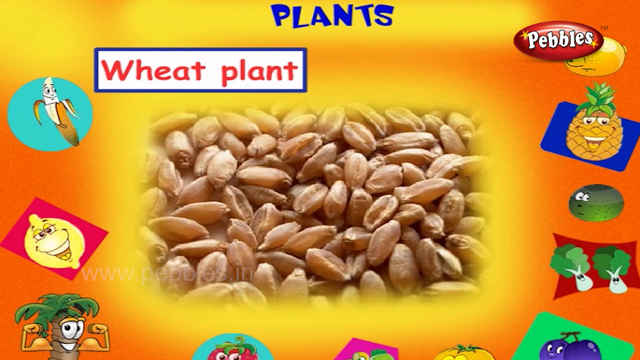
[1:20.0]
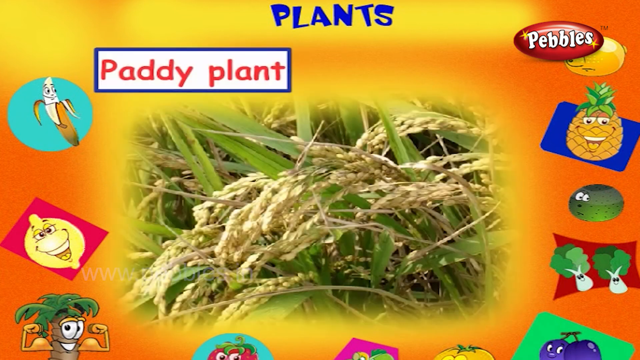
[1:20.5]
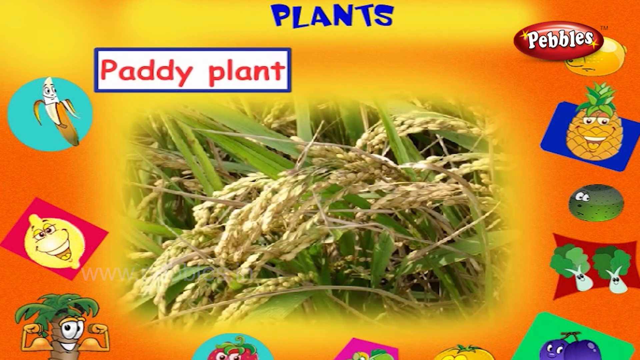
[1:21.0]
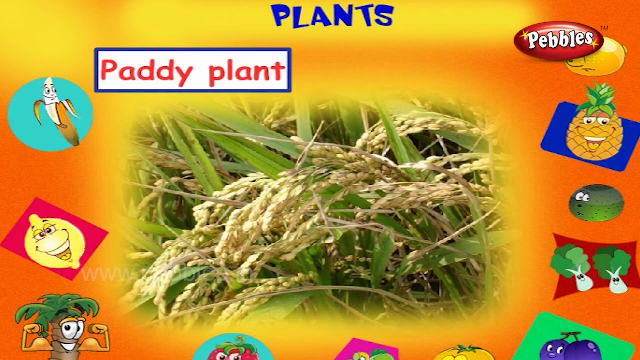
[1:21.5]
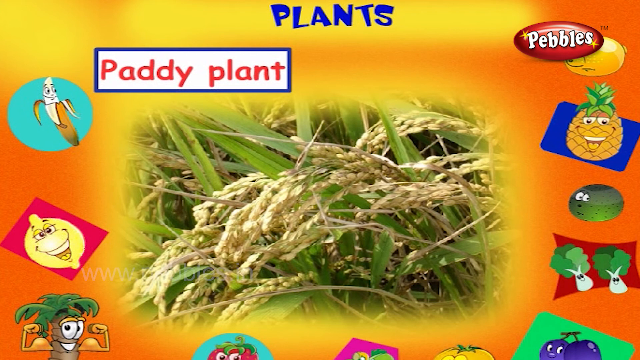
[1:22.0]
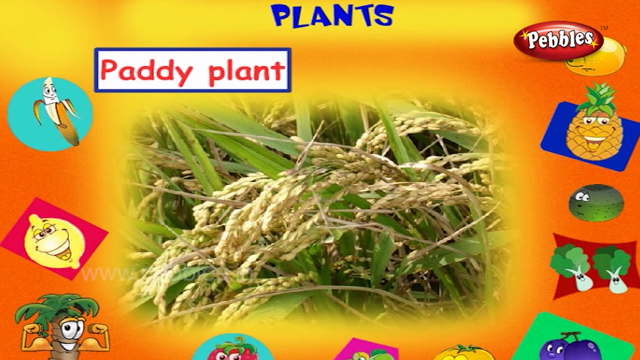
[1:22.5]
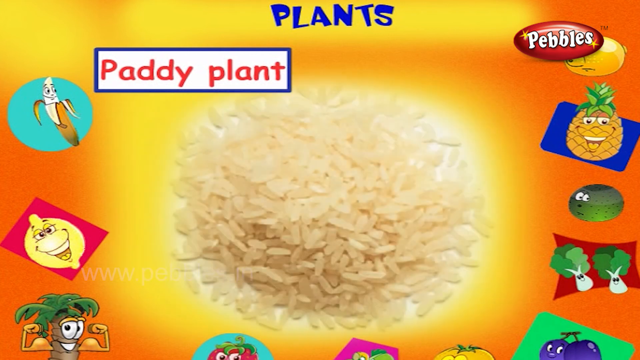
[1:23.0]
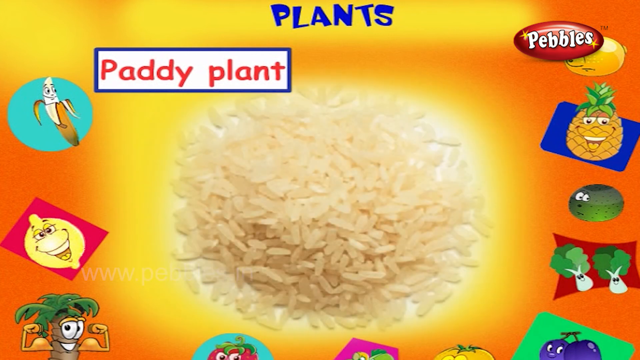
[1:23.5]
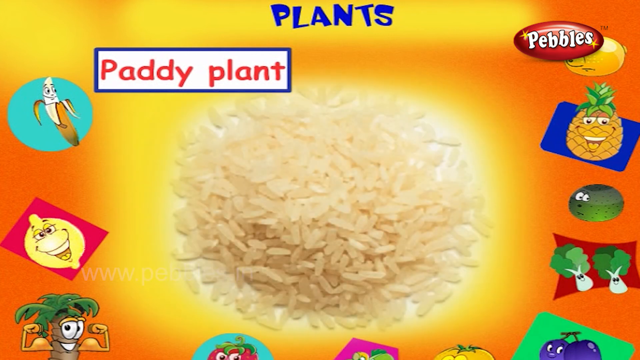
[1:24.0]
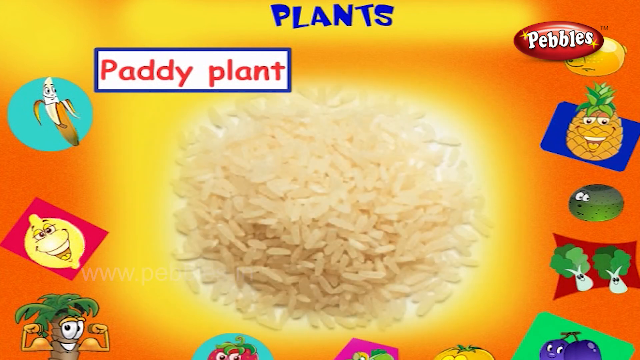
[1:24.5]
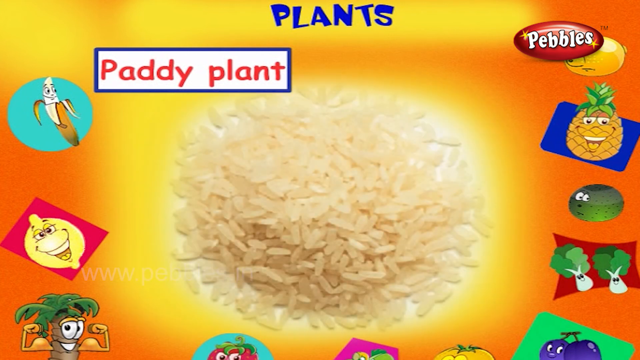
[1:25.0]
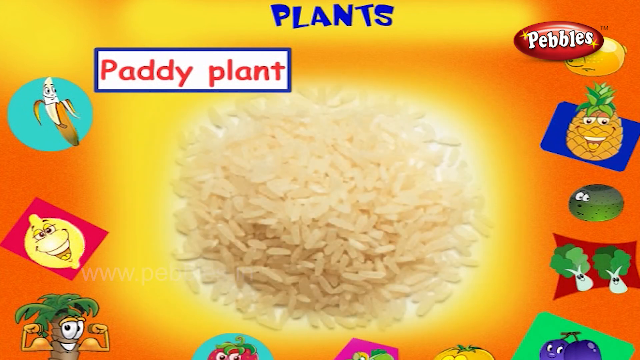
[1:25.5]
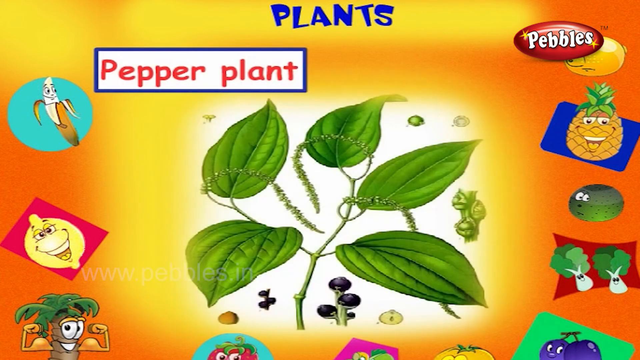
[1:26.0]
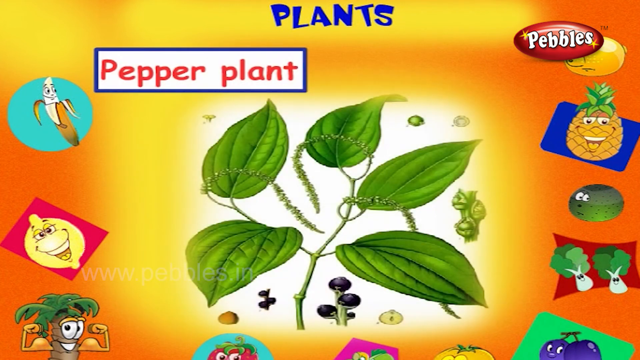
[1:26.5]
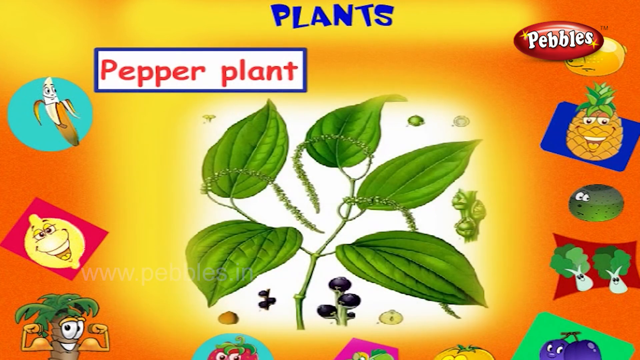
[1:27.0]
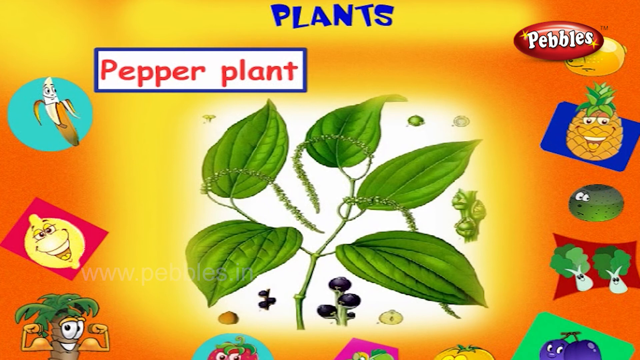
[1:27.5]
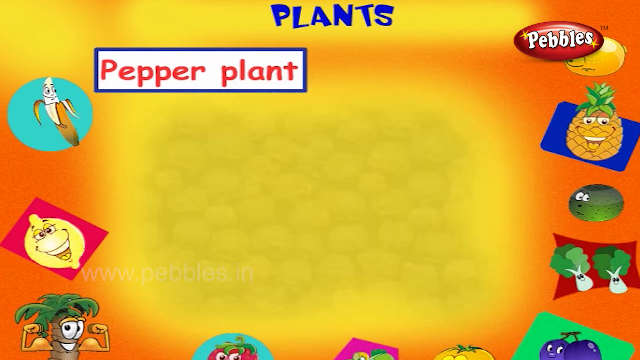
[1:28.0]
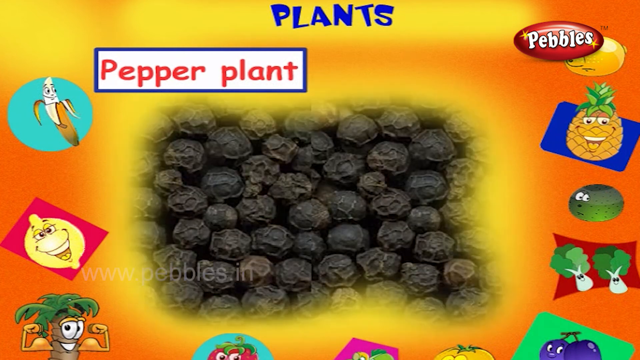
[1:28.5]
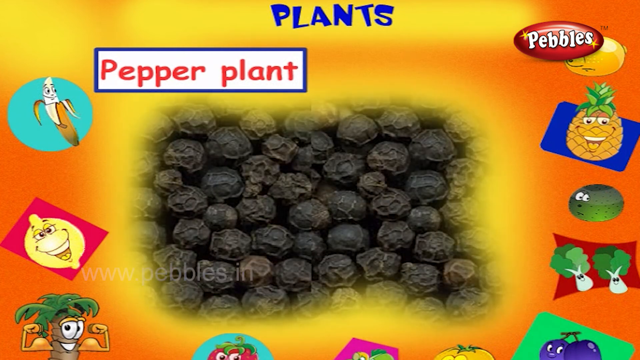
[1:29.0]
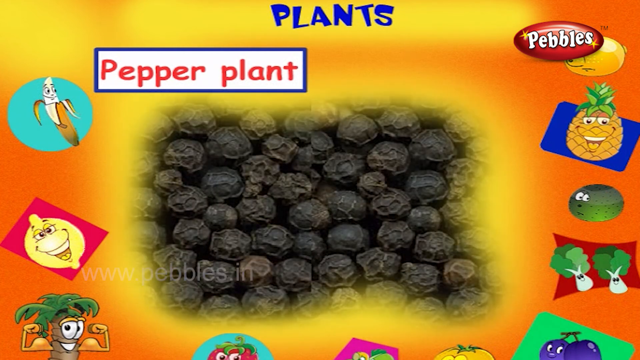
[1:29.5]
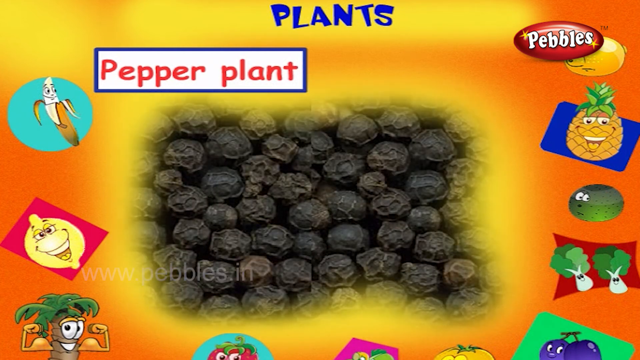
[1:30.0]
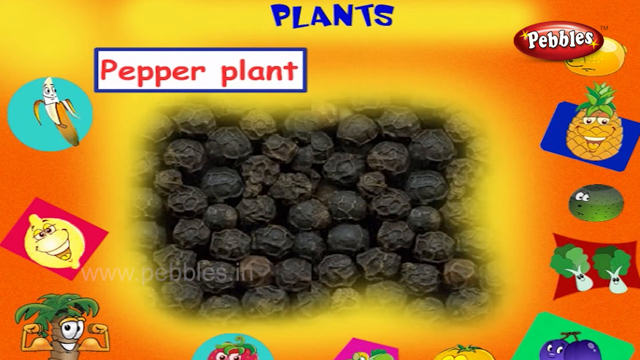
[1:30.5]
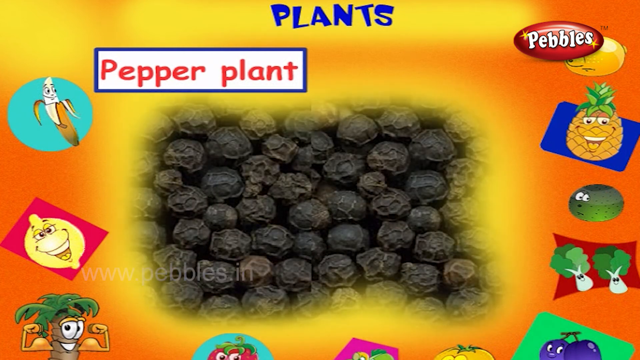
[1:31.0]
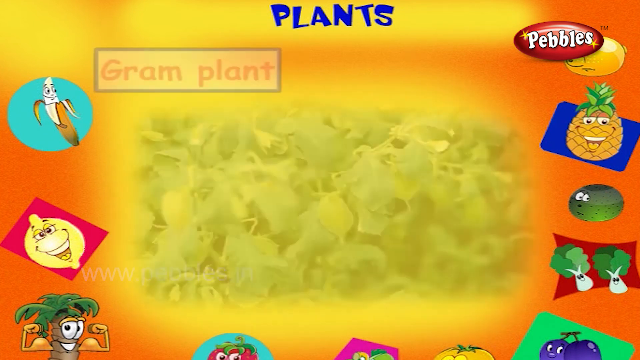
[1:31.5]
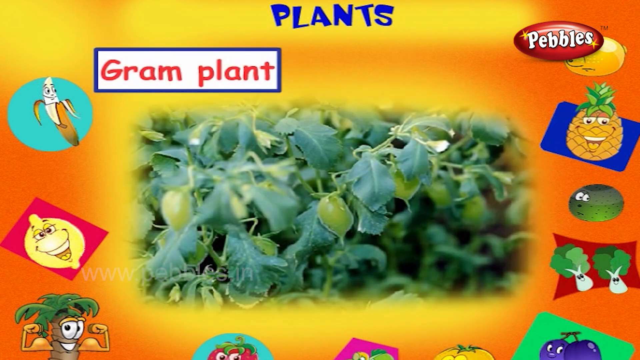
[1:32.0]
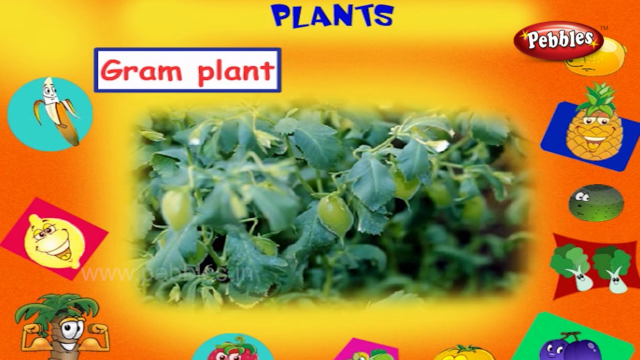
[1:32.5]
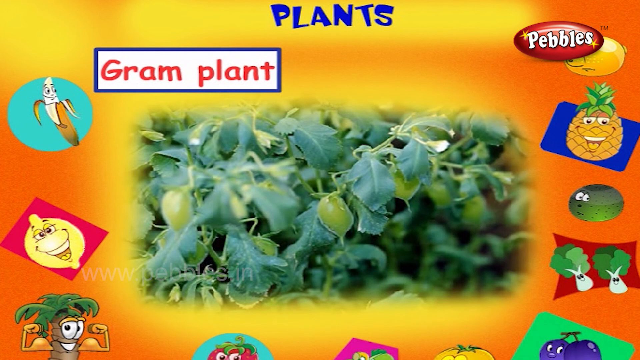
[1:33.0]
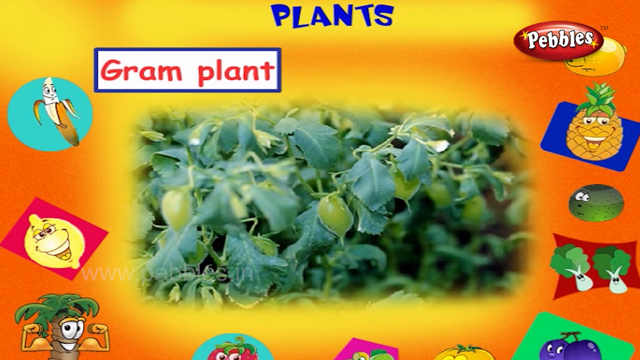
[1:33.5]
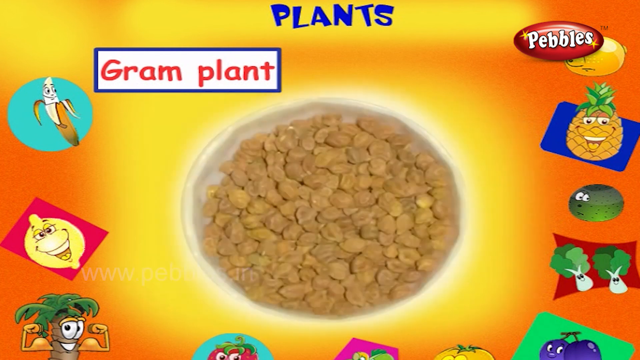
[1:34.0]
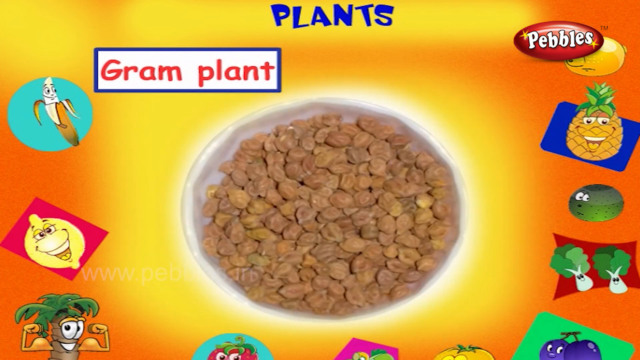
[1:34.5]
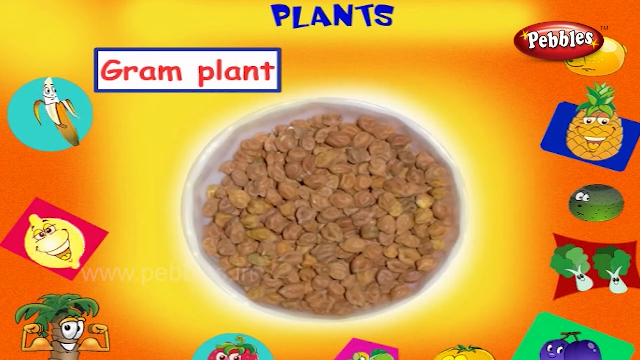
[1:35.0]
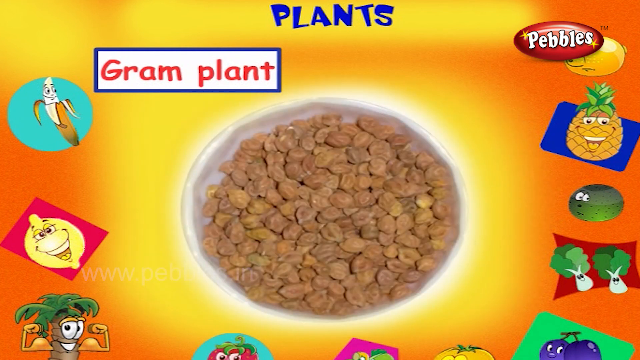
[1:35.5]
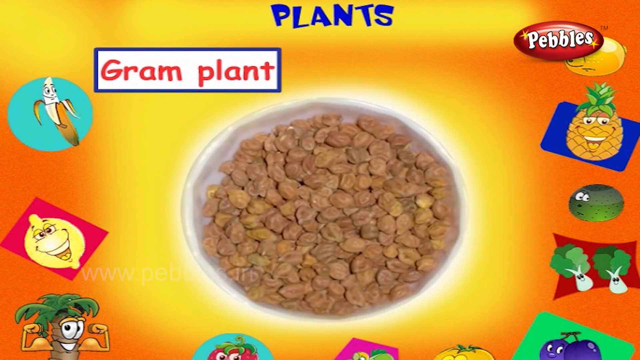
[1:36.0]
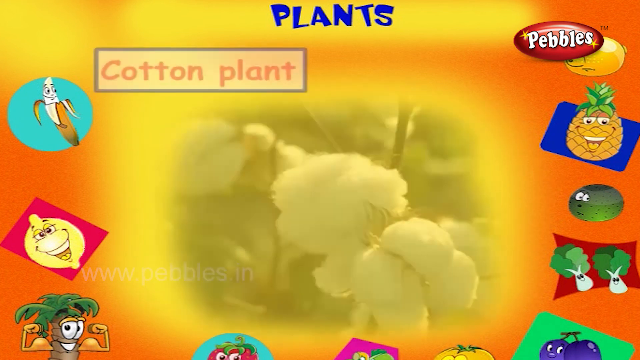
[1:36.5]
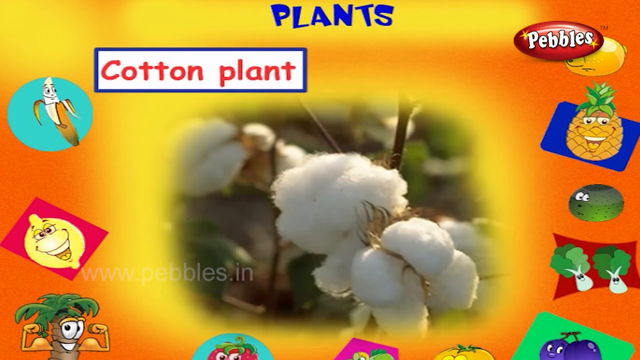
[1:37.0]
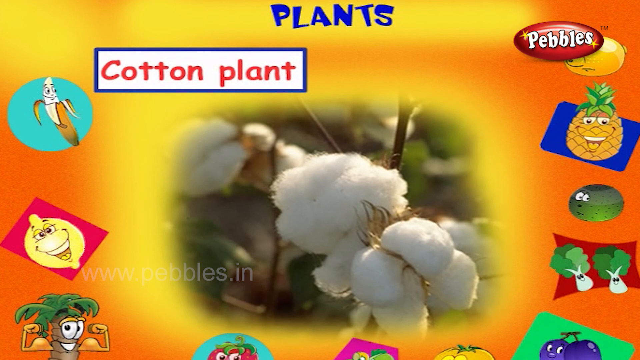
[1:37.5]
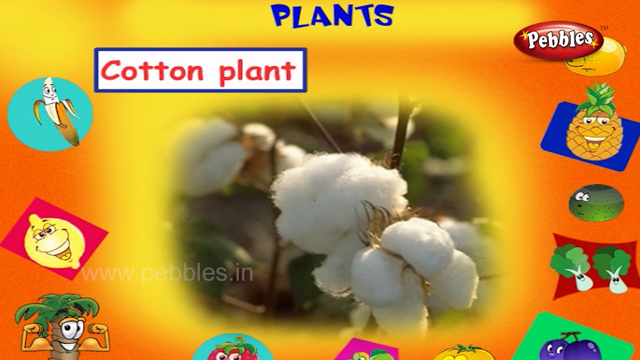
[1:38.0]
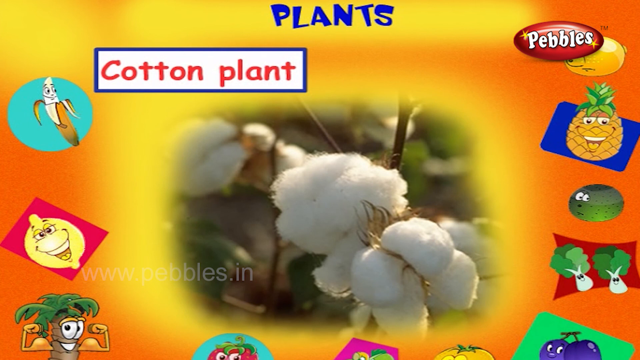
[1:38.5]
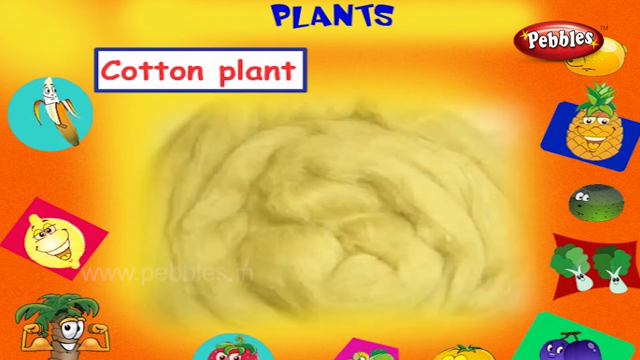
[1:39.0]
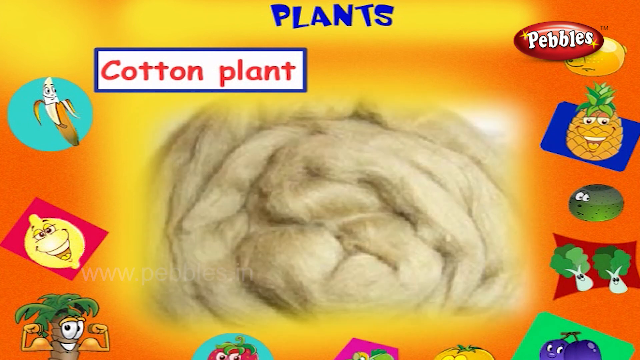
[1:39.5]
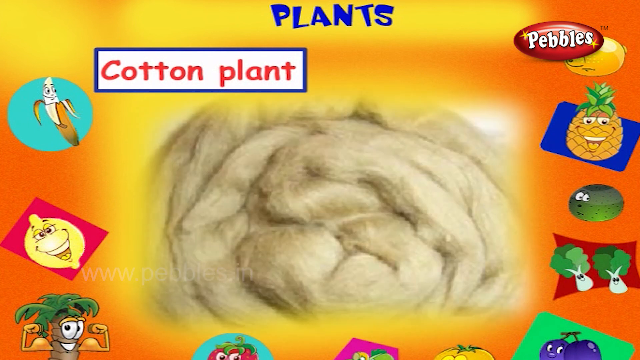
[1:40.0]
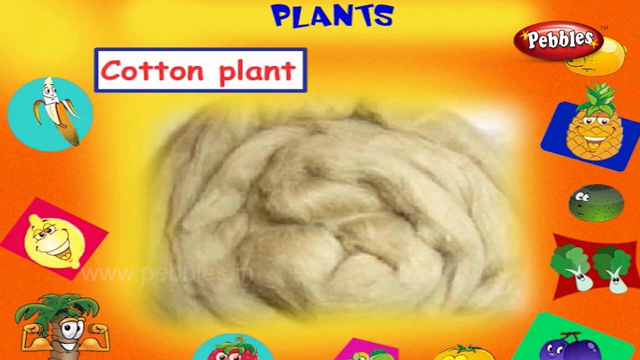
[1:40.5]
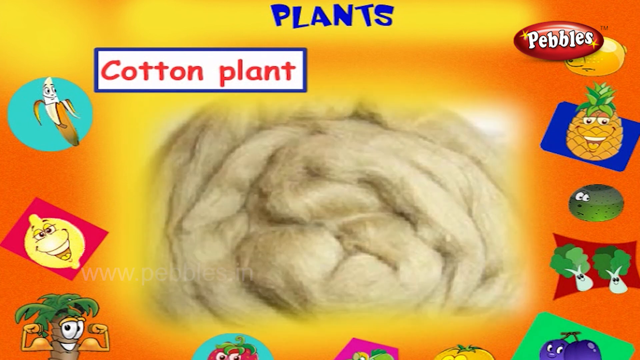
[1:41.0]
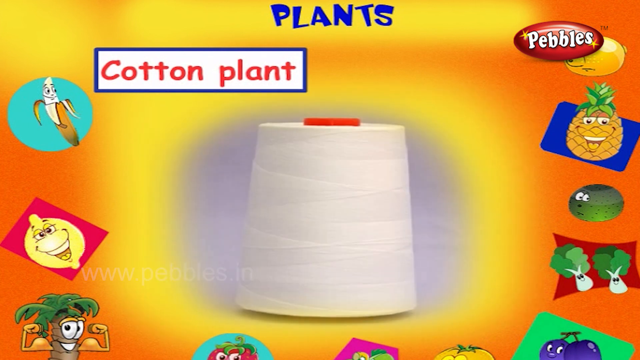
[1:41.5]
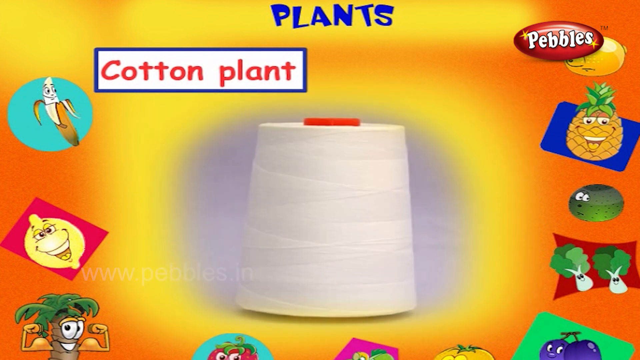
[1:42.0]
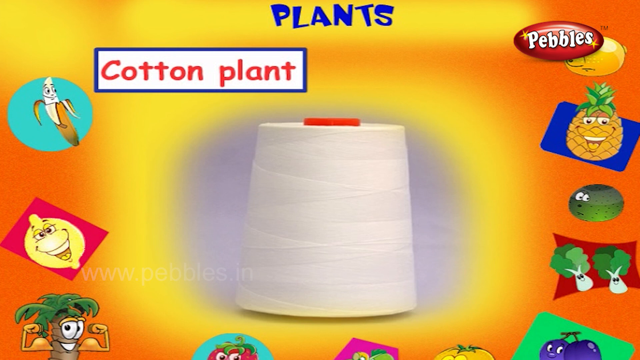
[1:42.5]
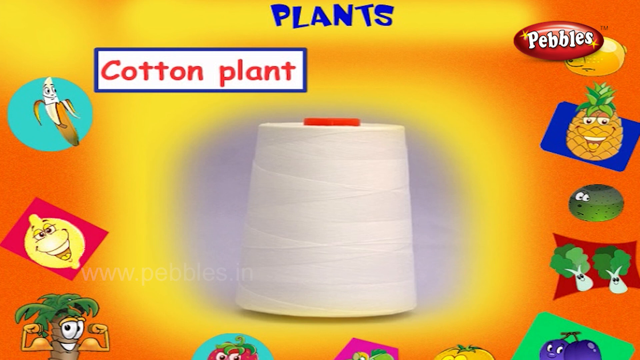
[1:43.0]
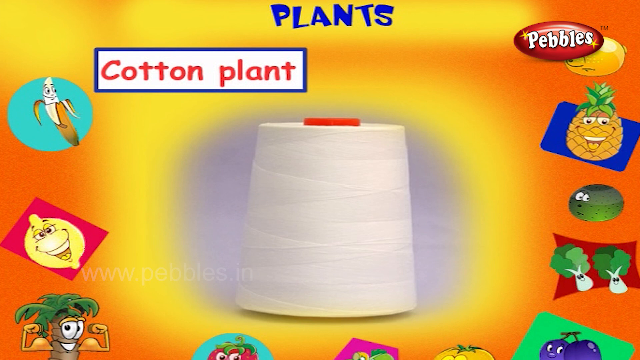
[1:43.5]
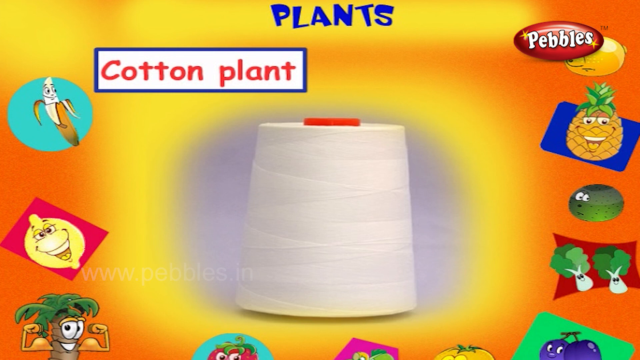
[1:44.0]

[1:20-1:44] A paddy plant is shown in the field, followed by its end product, rice. A pepper plant with green leaves is shown, followed by its product, pepper, which is black in colour. A gram plant is shown, followed by its end product, apparently grams. A cotton plant is then shown, followed by the cotton obtained from it, which is used in making cloth and wool, and the end products are shown. Each plant is shown in the field and then its product.